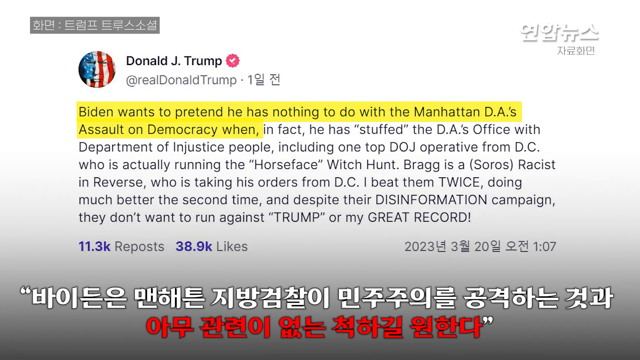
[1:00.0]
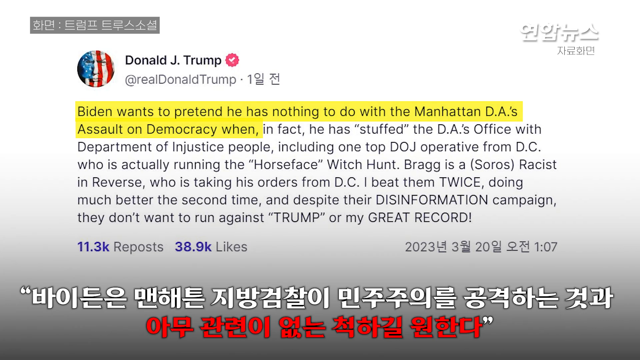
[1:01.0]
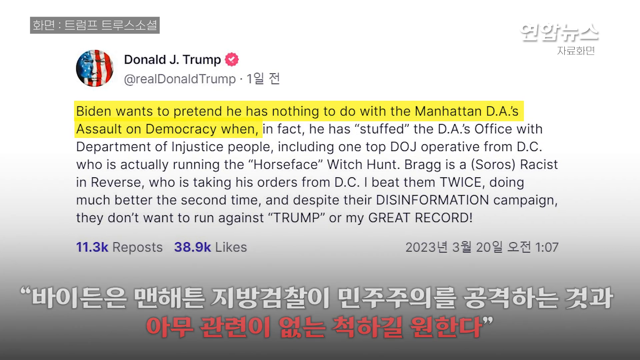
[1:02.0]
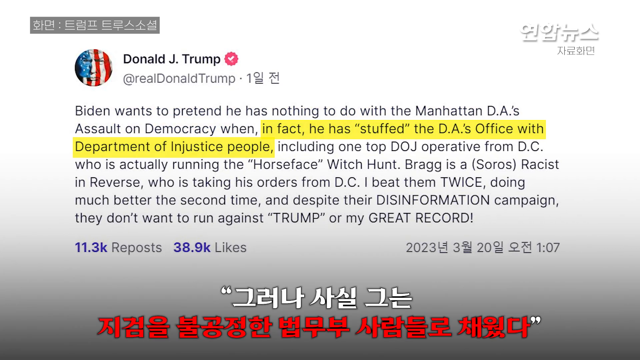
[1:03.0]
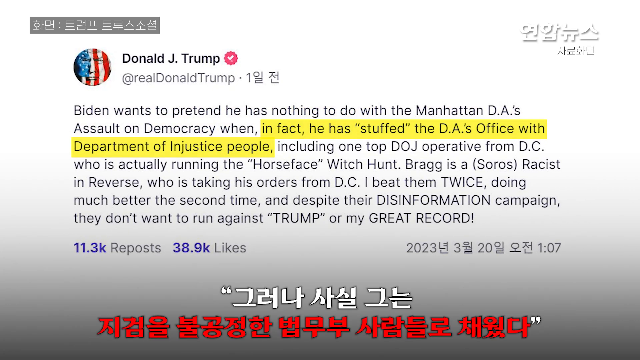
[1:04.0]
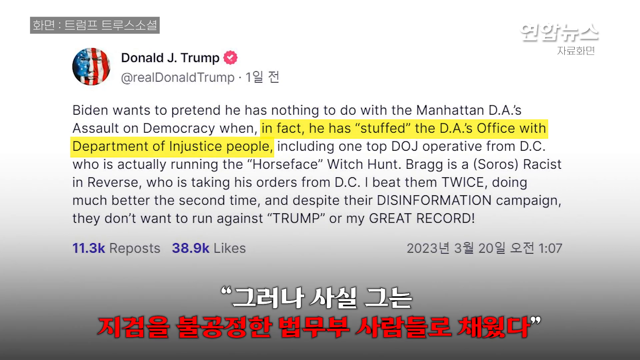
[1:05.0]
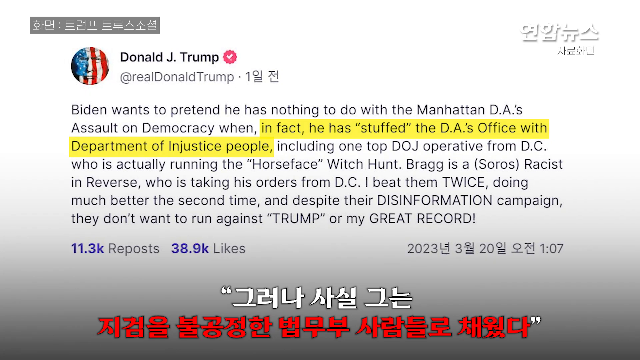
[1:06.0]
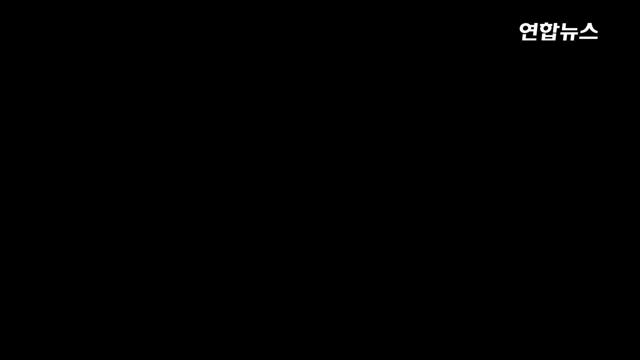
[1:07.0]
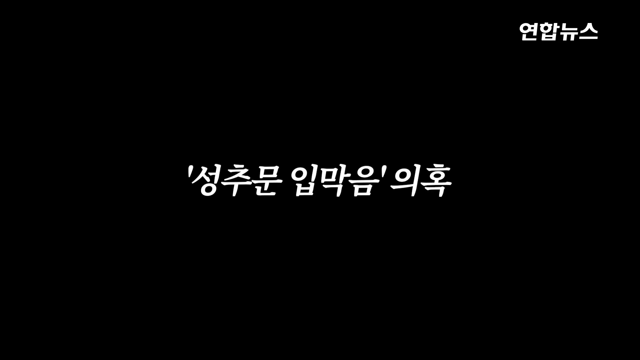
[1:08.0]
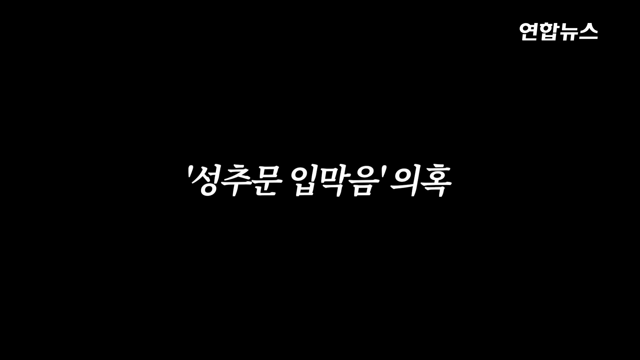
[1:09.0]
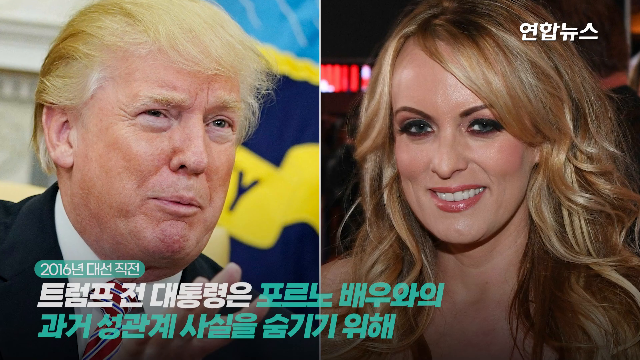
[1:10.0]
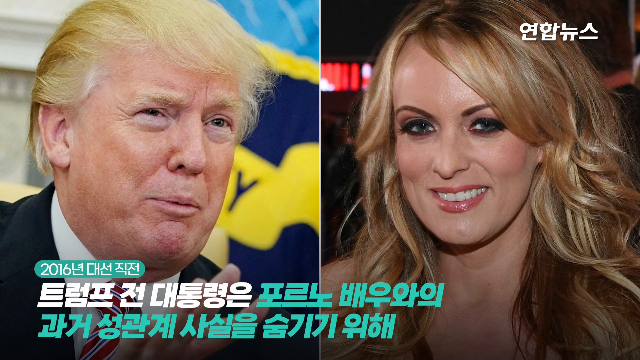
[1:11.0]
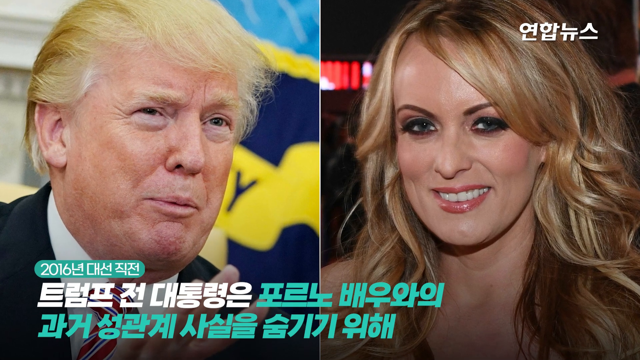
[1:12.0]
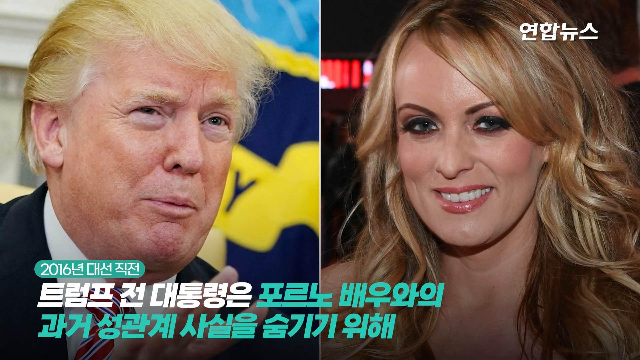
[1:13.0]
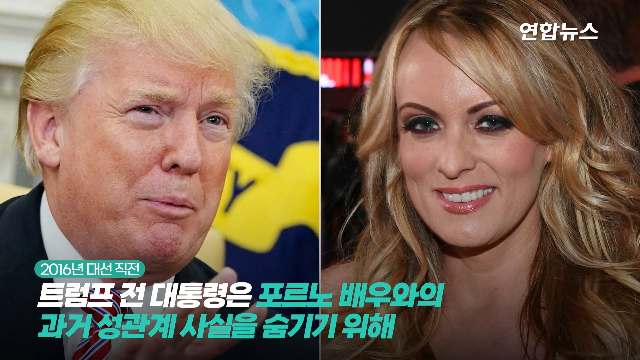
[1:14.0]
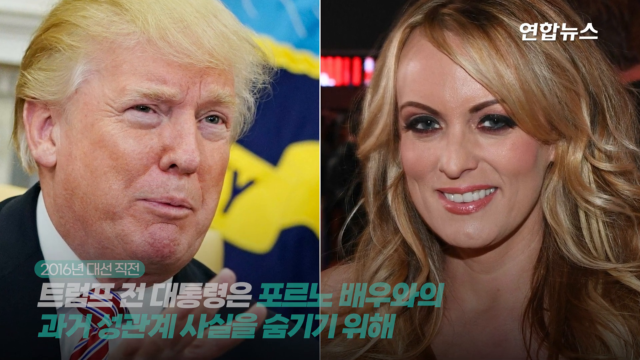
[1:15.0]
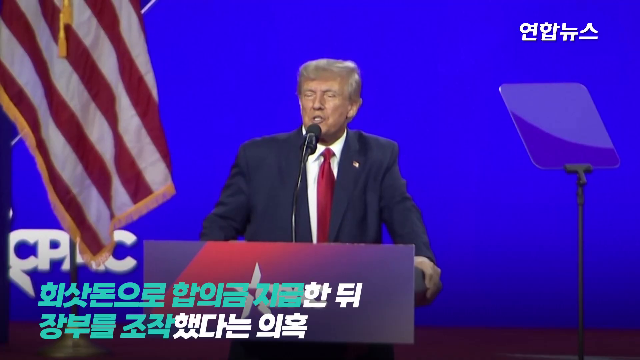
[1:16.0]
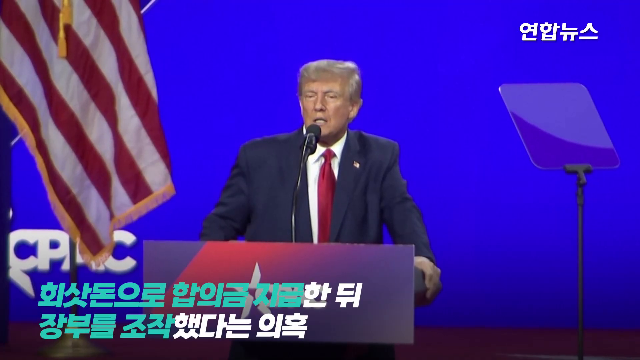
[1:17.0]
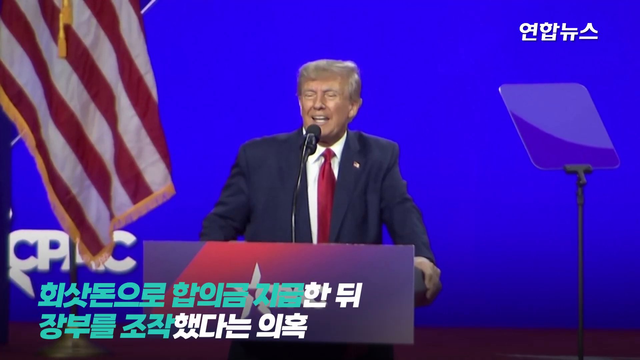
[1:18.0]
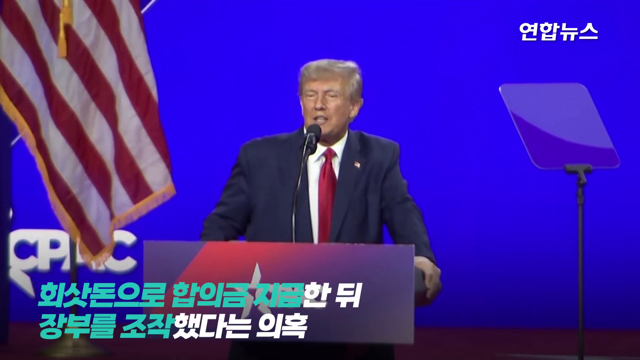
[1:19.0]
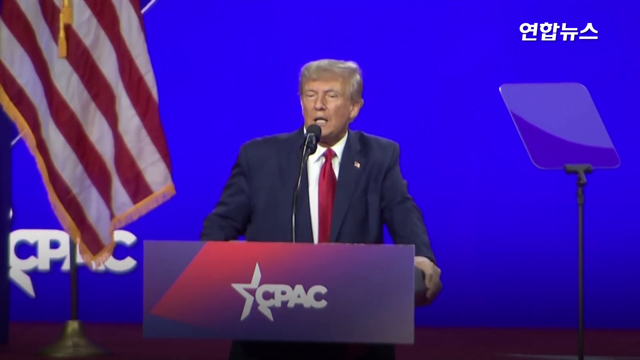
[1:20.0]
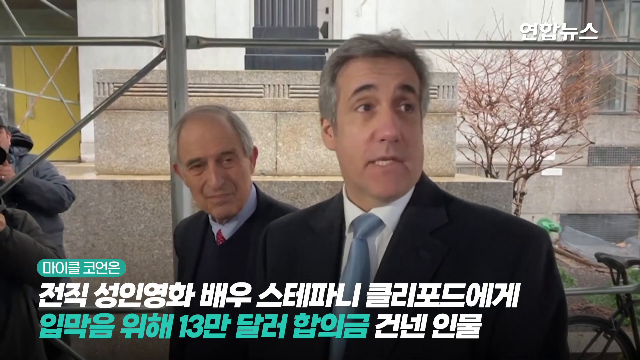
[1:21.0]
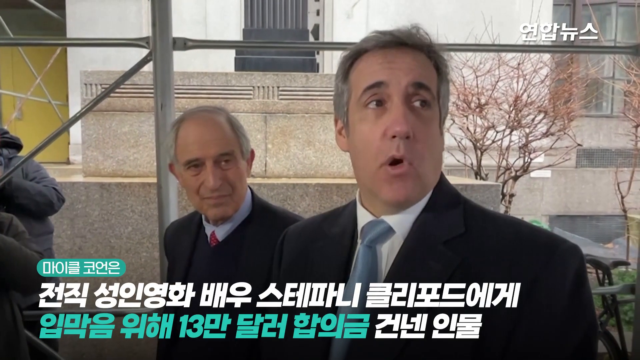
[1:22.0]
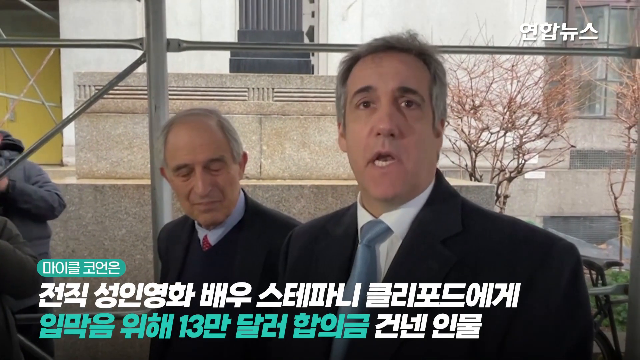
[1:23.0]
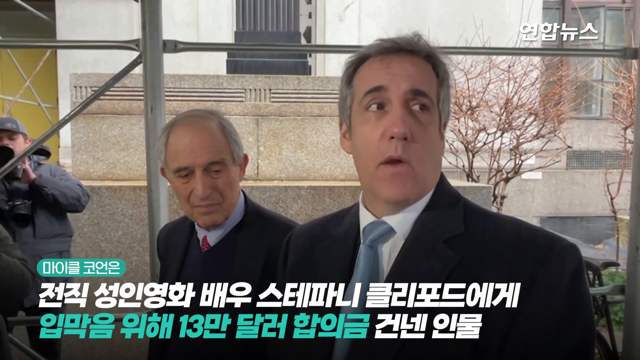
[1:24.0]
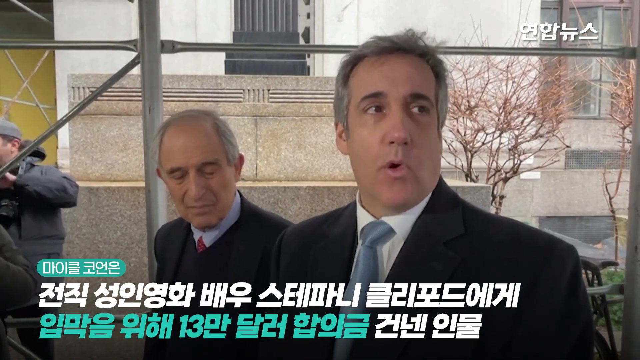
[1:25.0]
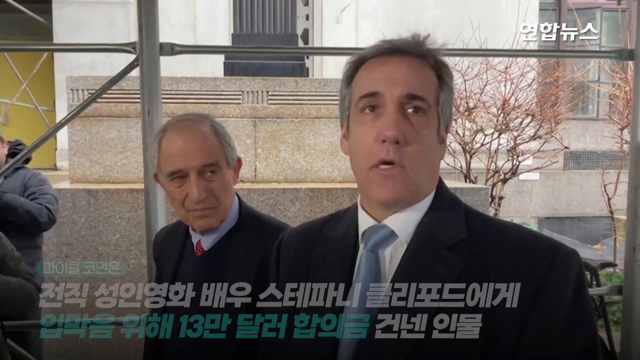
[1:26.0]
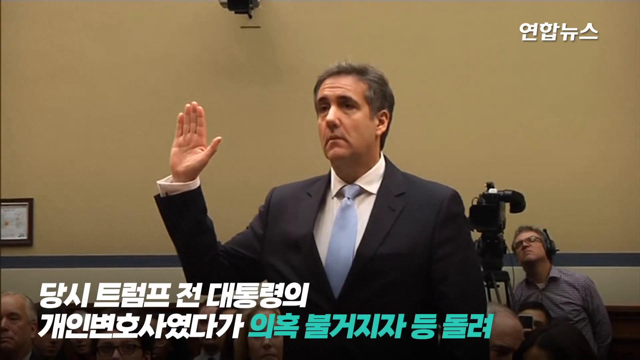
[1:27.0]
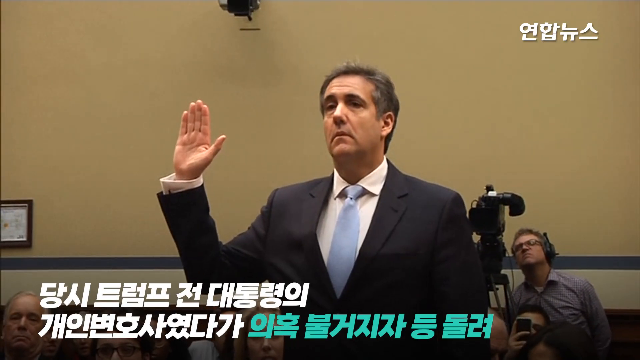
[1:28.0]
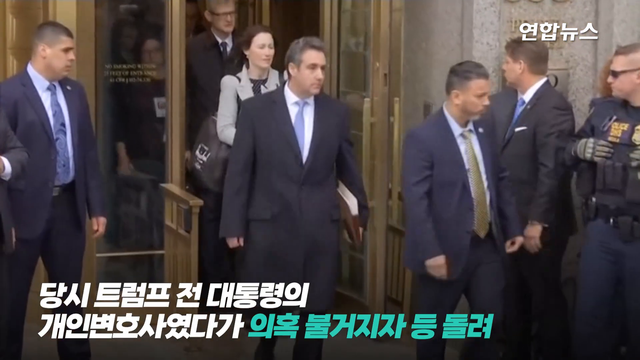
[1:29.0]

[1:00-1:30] The tweet reads: "Biden wants to pretend he has nothing to do with the Manhattan DA's assault on democracy when in fact he has stuffed the DA's office with Department of Injustice people including one top DOJ operative from DC who is actually running the horse face witch hunt Bragg is a Soros racist in reverse who is taking his orders from DC? I beat them twice doing much better the second time and despite their disinformation campaign, they don't want to run against Trump or my great record." Trump is shown on a podium in front of a teleprompter, reading, and then Michael Cohen appears.